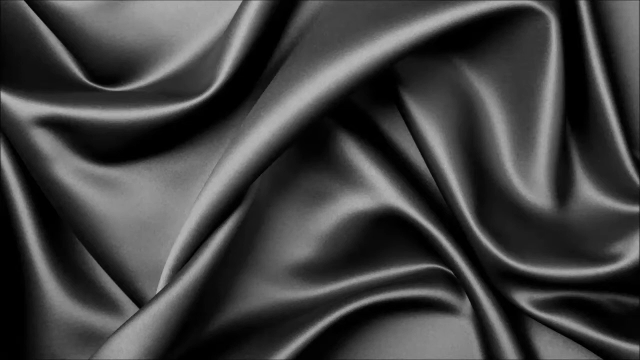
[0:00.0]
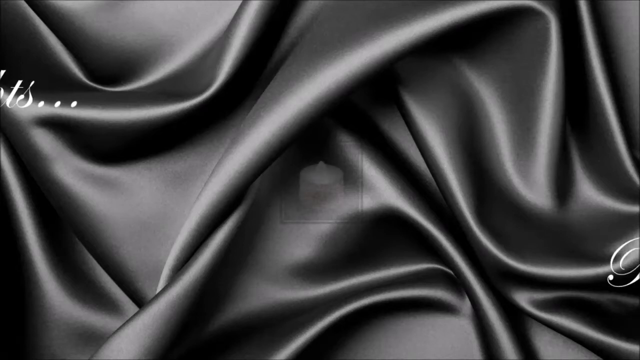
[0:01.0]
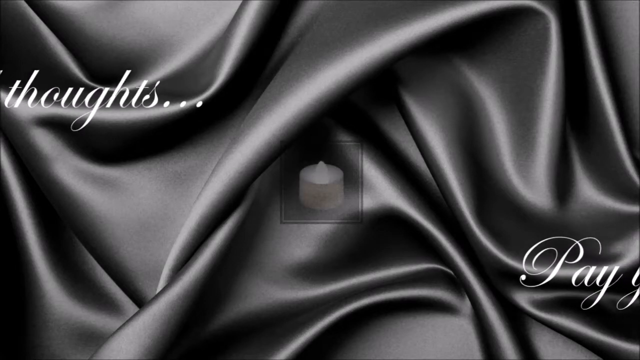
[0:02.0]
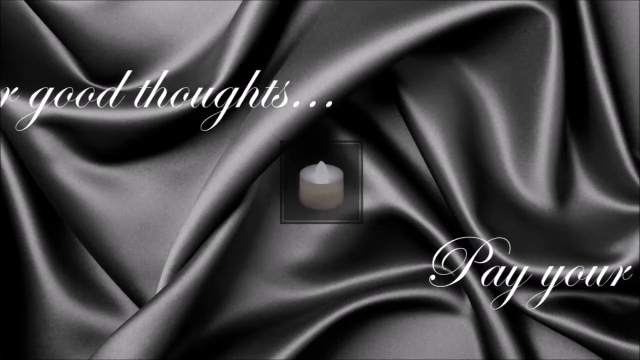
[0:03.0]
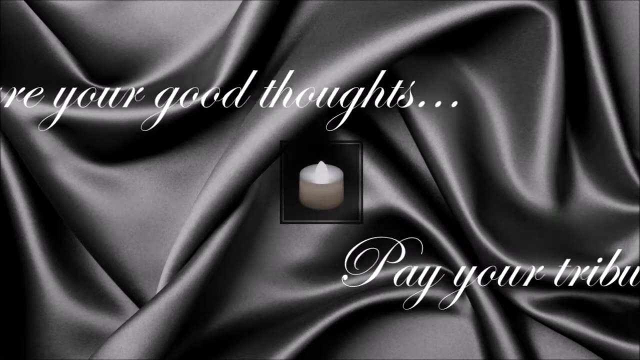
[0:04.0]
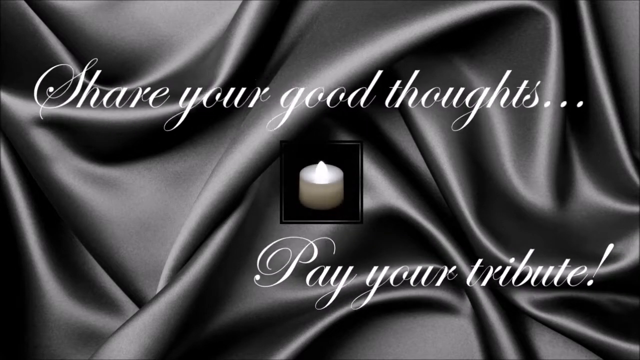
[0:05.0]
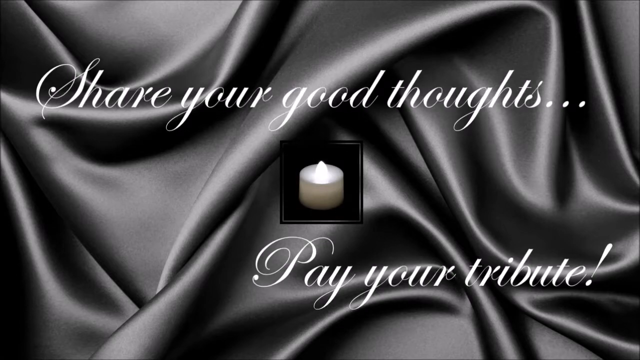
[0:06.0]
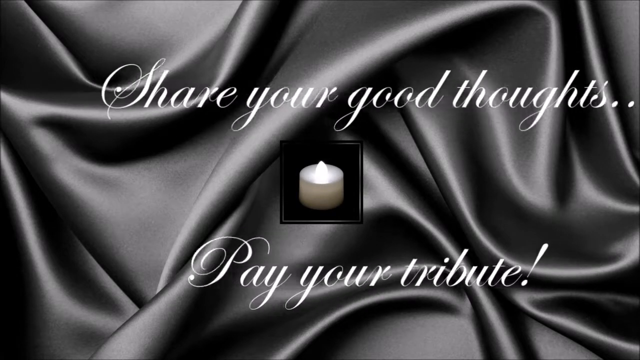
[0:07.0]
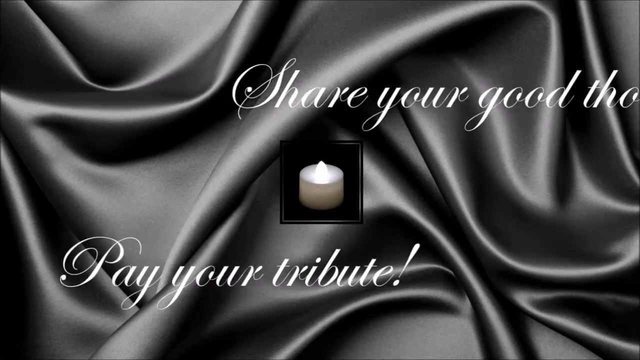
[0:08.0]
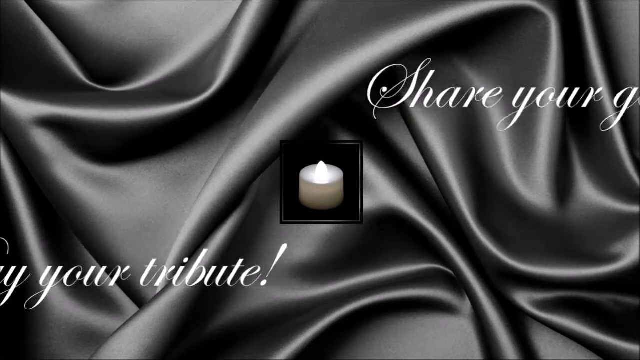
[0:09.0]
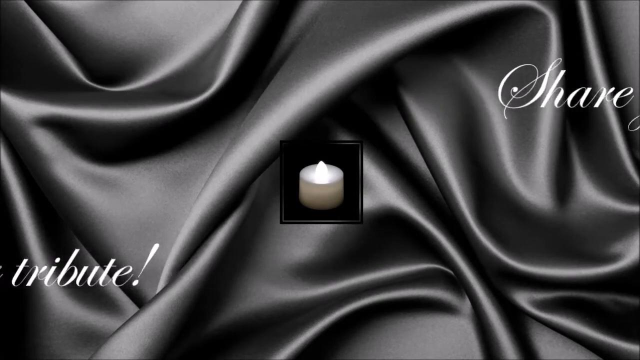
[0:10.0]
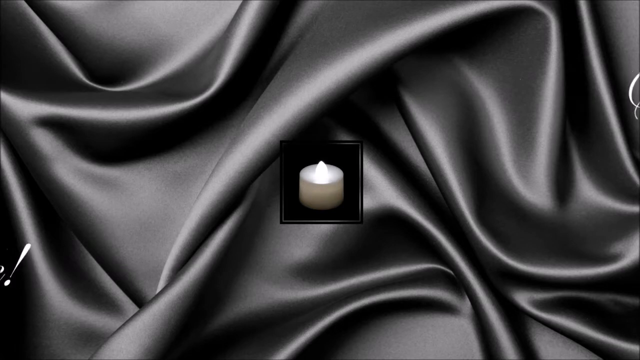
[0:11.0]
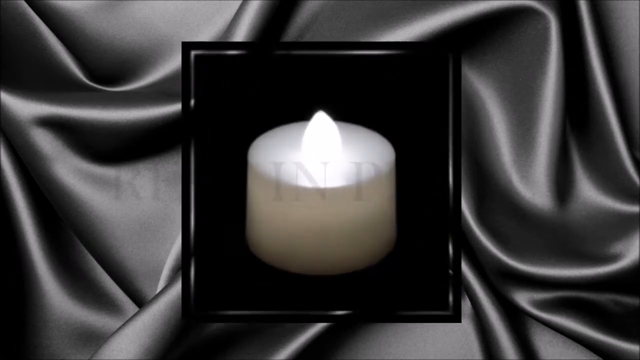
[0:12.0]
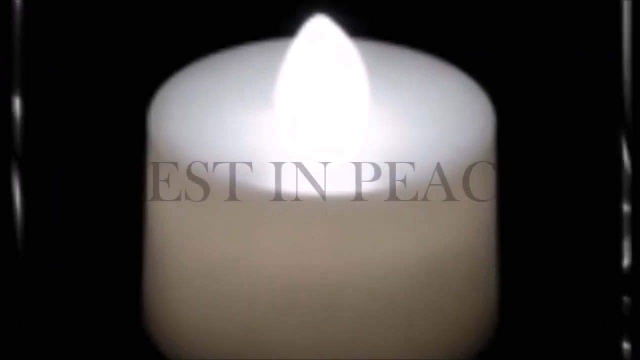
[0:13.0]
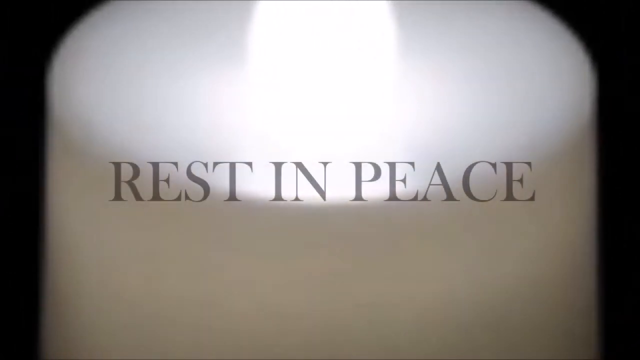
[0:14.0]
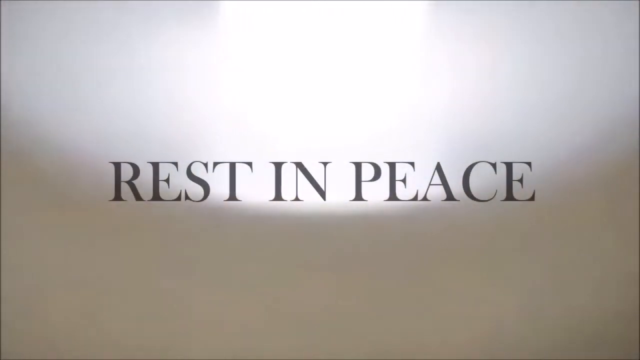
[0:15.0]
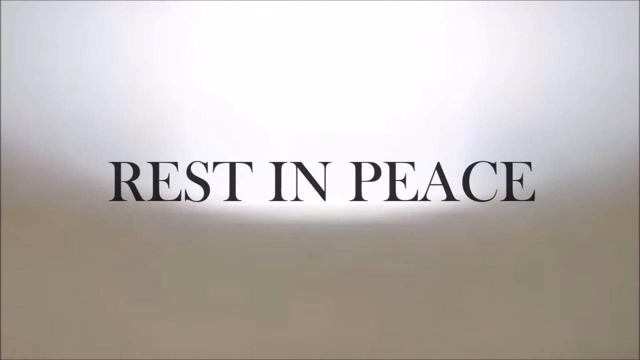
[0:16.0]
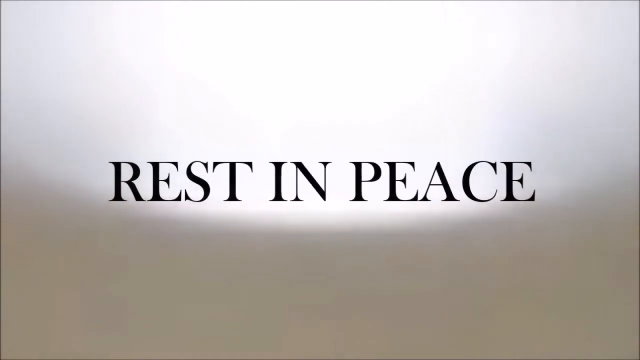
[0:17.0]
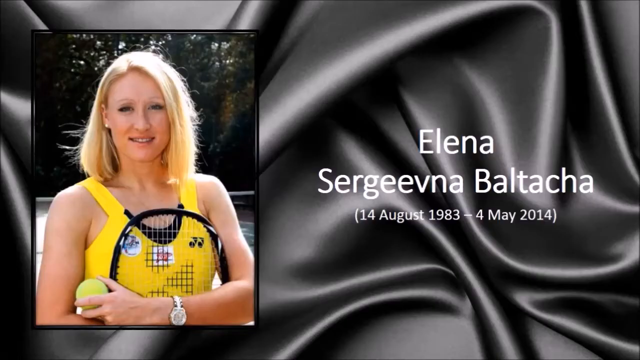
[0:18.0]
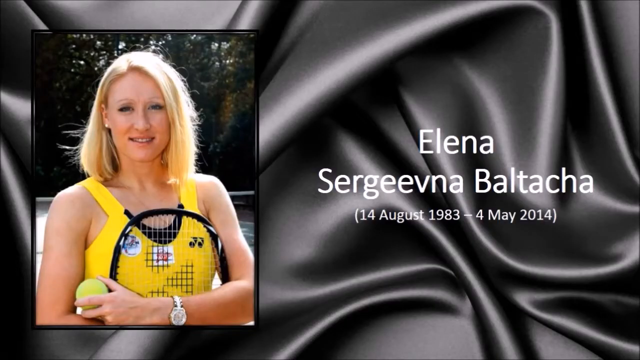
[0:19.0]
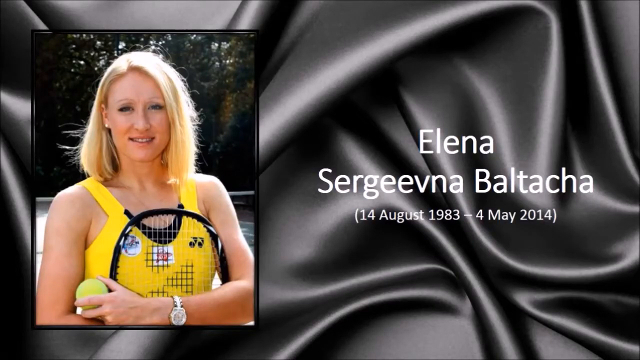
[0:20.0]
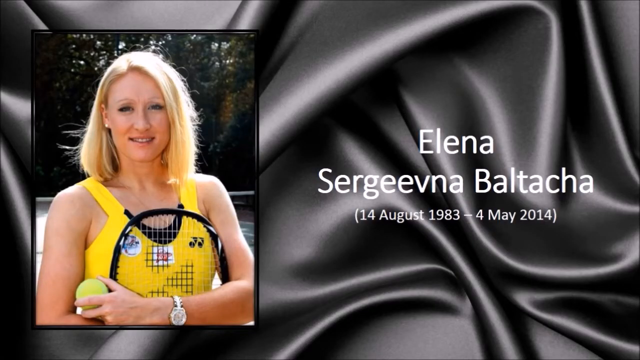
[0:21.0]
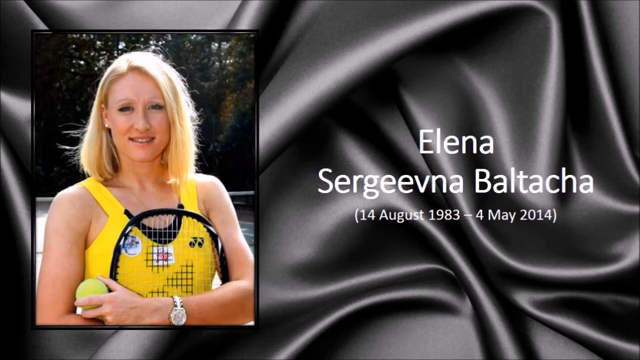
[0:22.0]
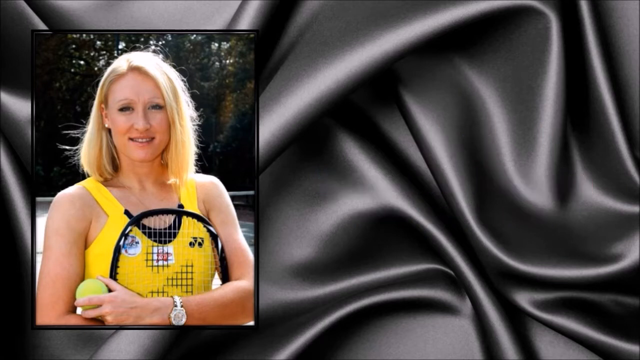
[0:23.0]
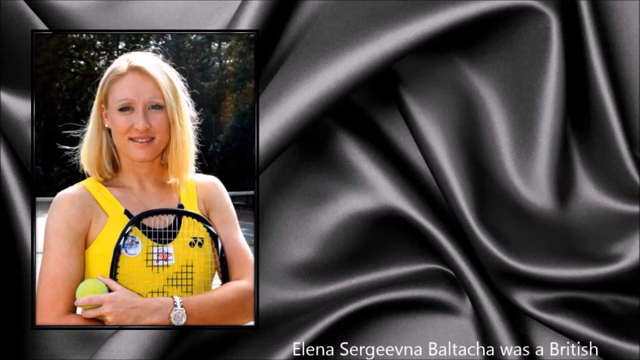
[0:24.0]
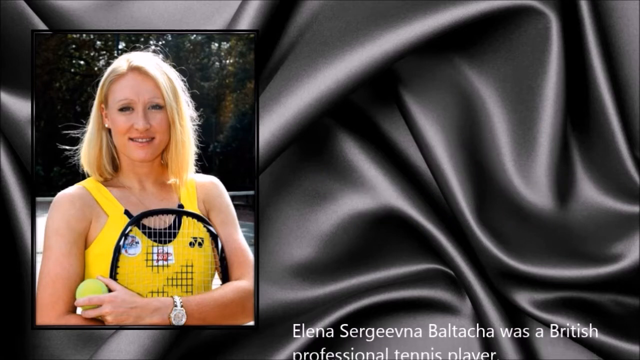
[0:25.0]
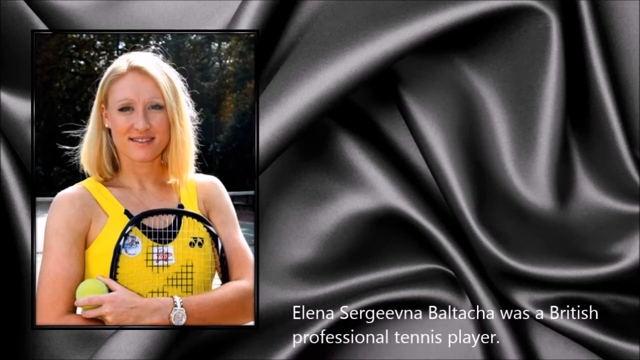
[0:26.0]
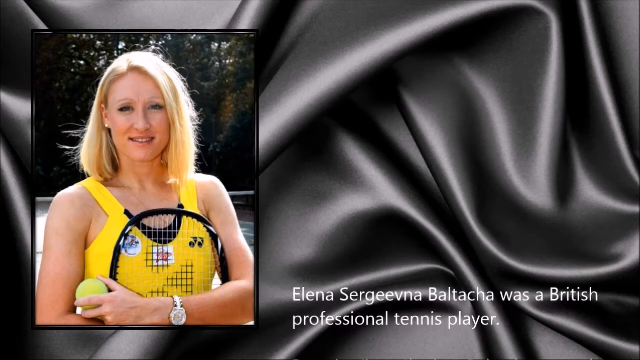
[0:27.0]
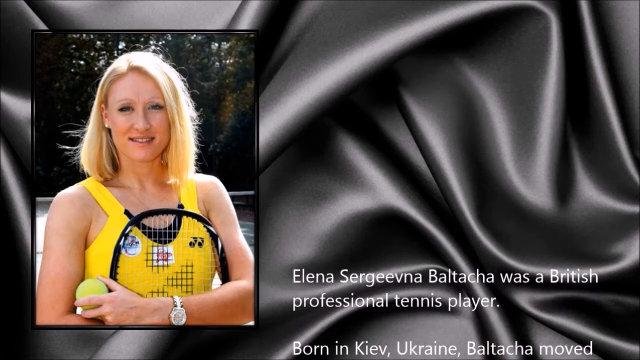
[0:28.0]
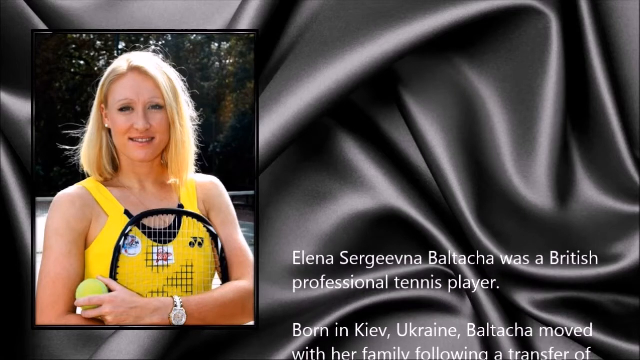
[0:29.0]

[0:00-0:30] The video opens on a screen showing nothing but a piece of shiny black satin or silk fabric, its wrinkles visible. The words "share your good thoughts" come in from the left of the screen moving right, and then "pay your tribute" comes in from the right moving left. A square slowly rises in the middle of the screen, and inside it is a white candle. The words slowly roll off the screen to the left and the right. The candle then gets really big, and across the middle of the screen "rest in peace" is written in black. The silk screen is then shown again. On the left side of the screen is a woman with long blonde hair wearing a yellow tank top and a diamond watch, holding a black tennis racket up to her chest, with a tennis ball in her left hand. To the right of her the text reads "Alina Sergeyevna Baltacha 14 August 1983 to 4 May 2014."